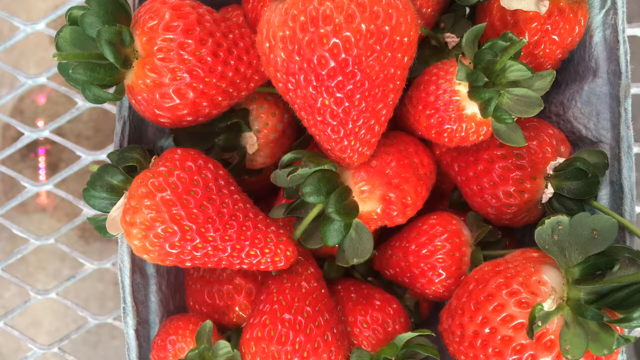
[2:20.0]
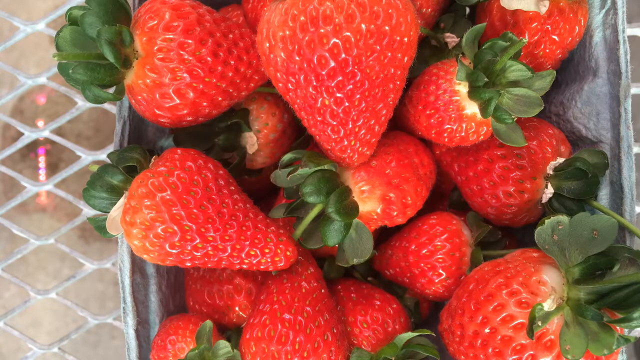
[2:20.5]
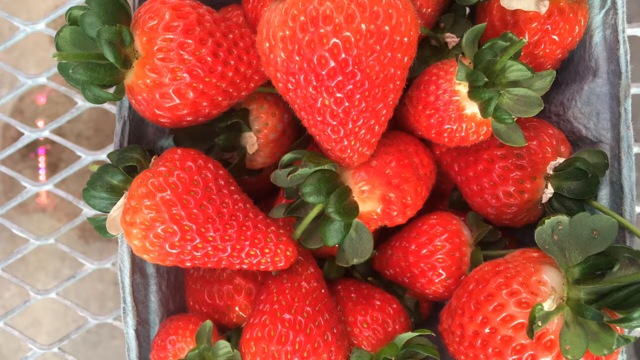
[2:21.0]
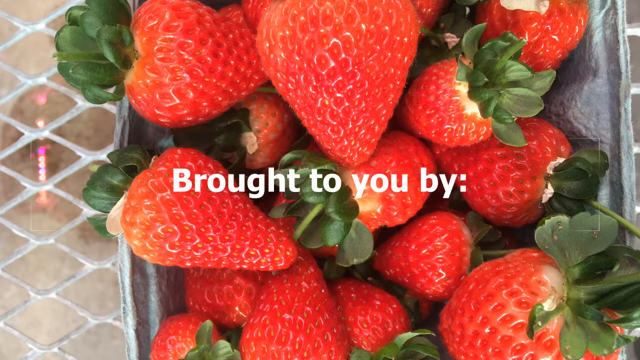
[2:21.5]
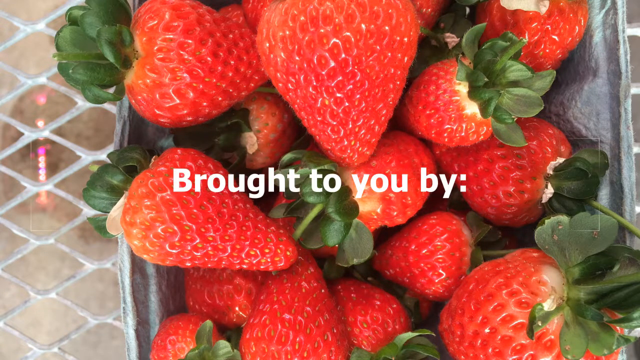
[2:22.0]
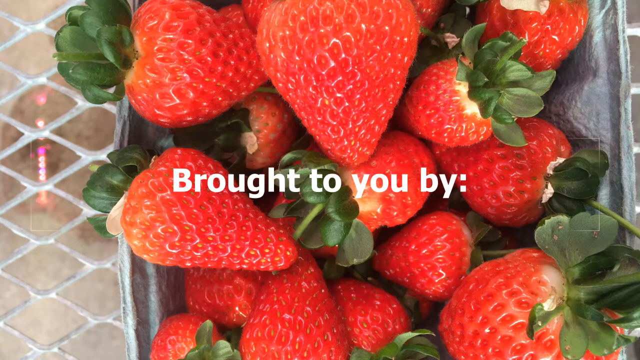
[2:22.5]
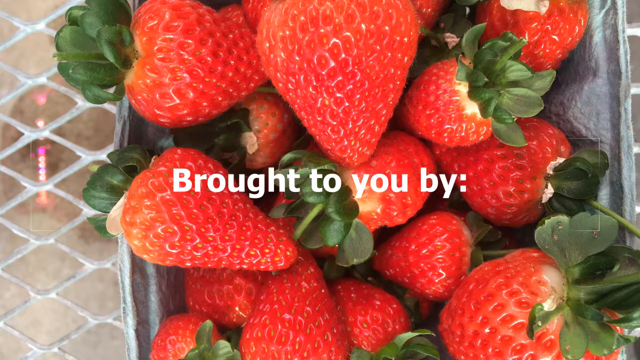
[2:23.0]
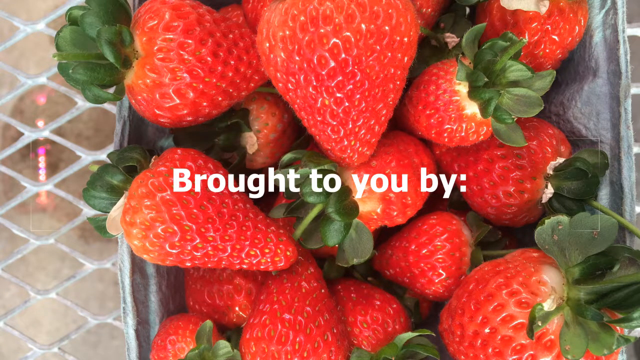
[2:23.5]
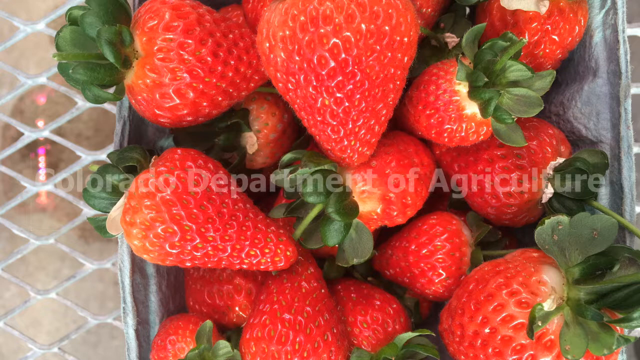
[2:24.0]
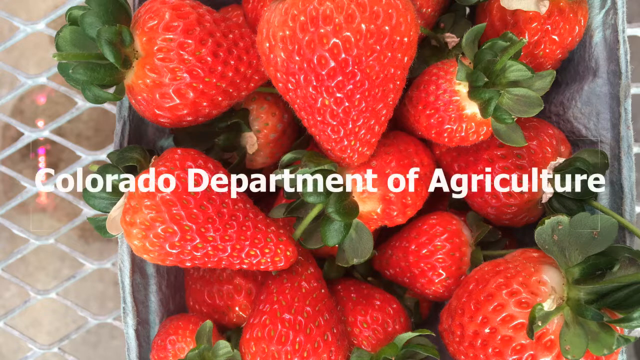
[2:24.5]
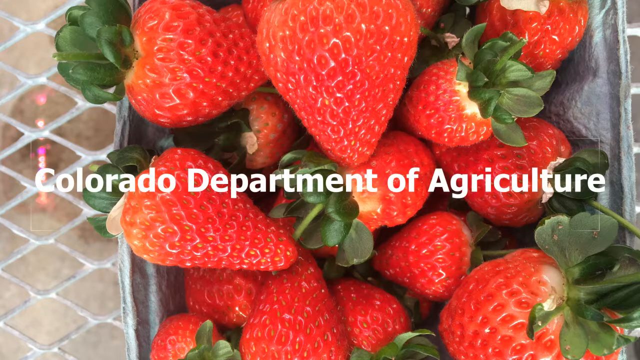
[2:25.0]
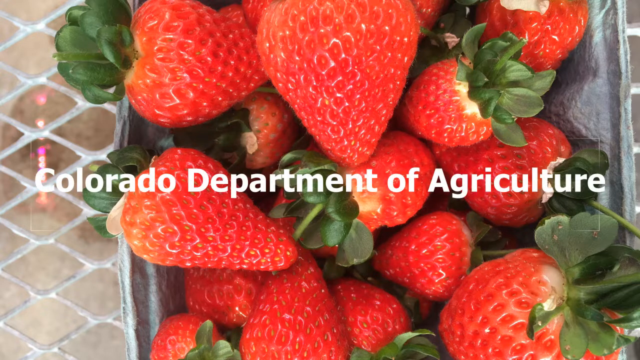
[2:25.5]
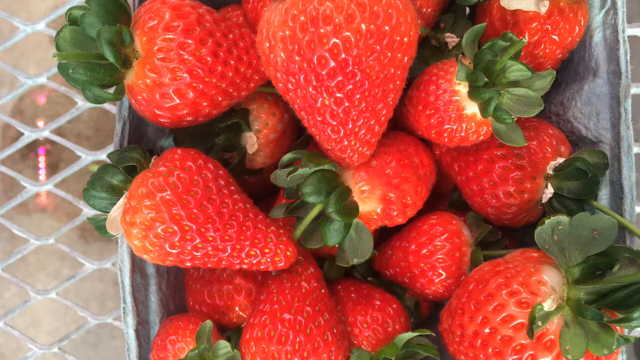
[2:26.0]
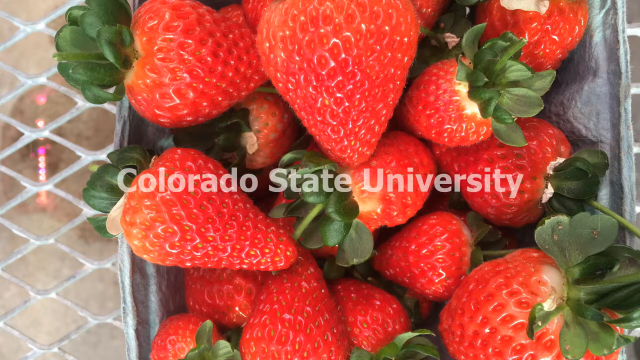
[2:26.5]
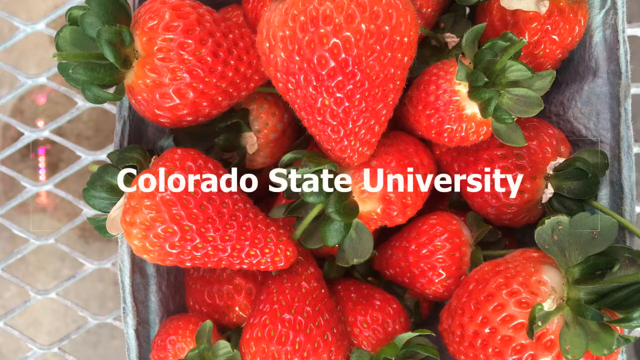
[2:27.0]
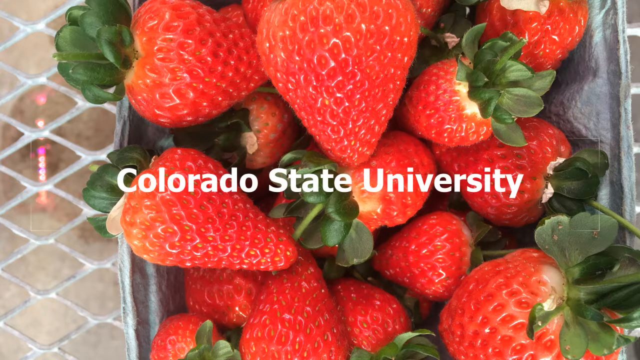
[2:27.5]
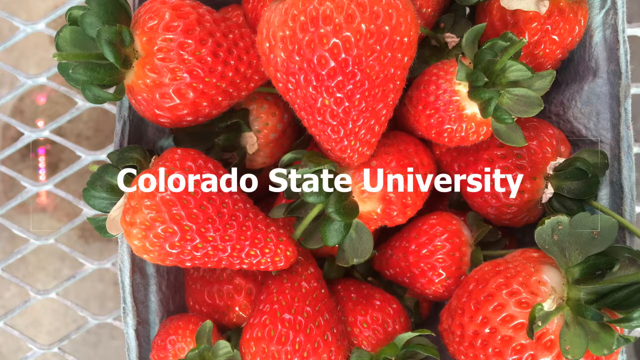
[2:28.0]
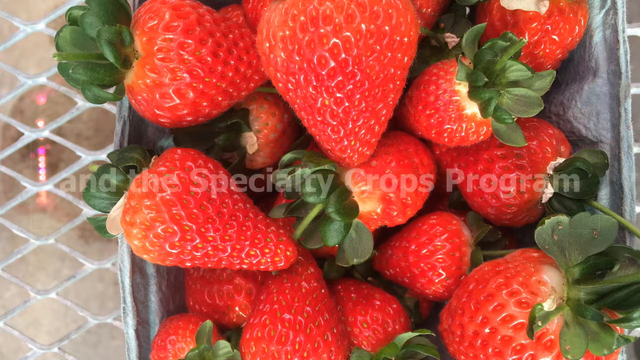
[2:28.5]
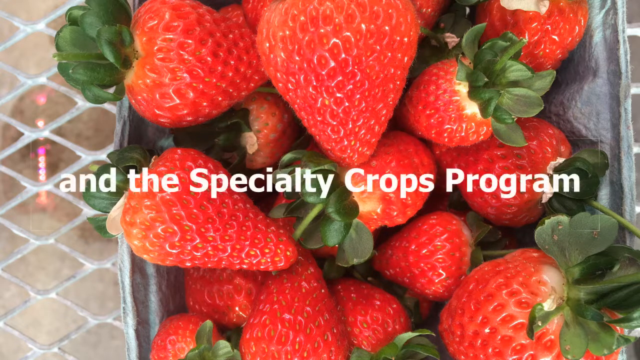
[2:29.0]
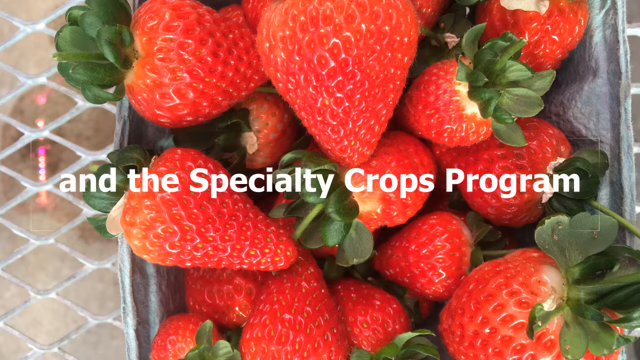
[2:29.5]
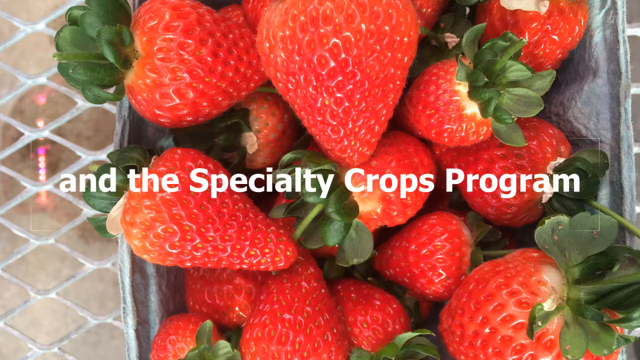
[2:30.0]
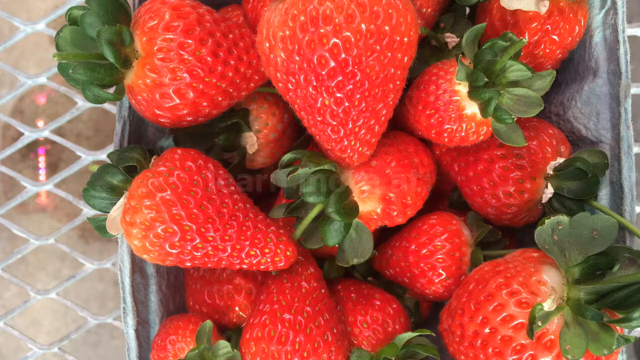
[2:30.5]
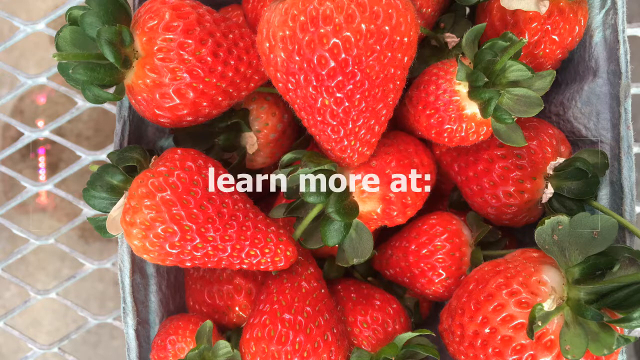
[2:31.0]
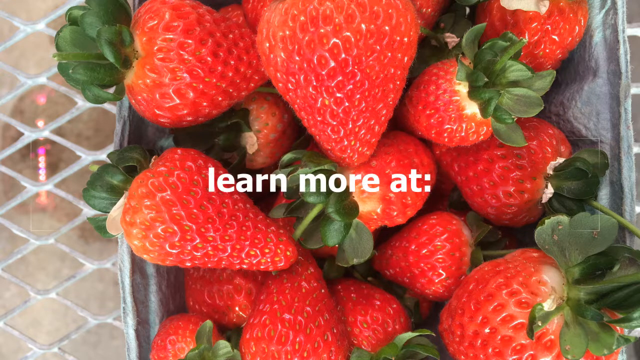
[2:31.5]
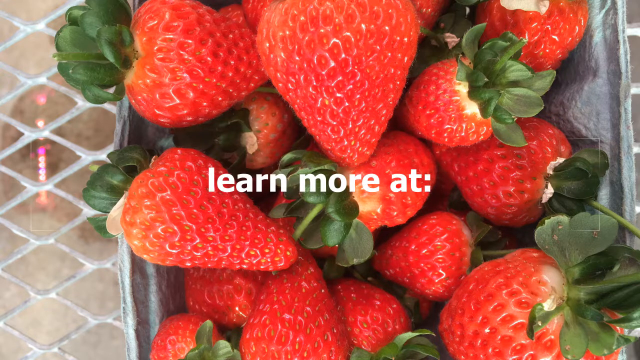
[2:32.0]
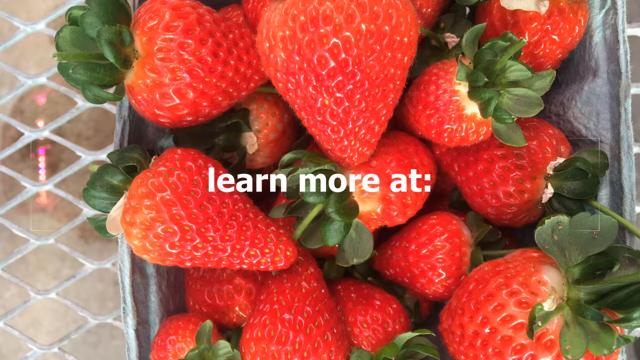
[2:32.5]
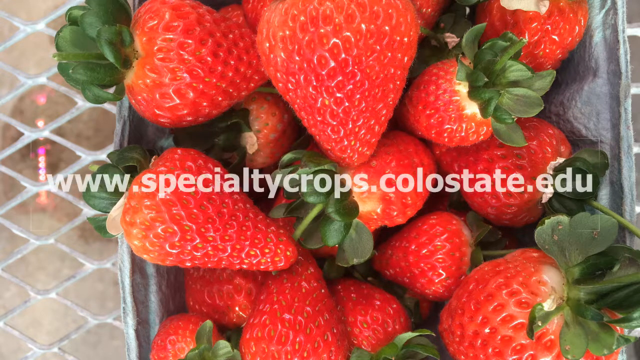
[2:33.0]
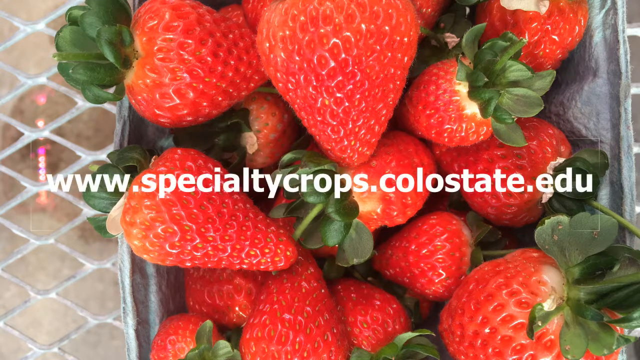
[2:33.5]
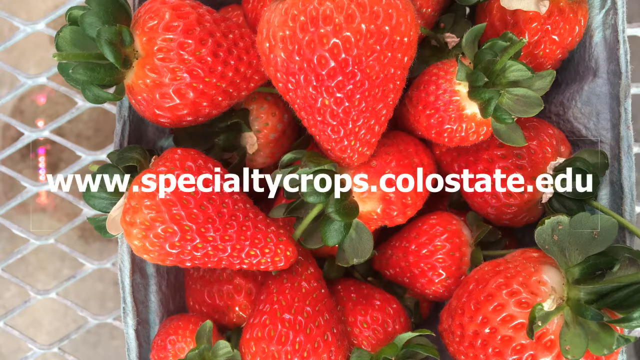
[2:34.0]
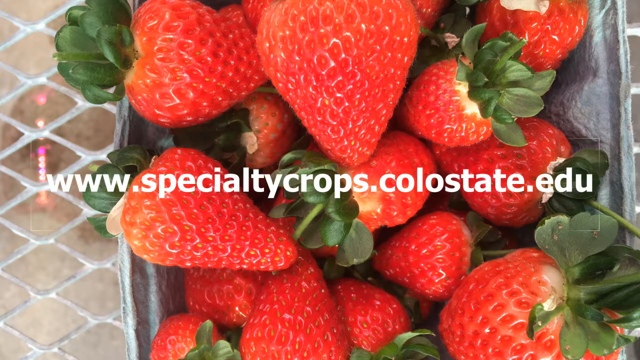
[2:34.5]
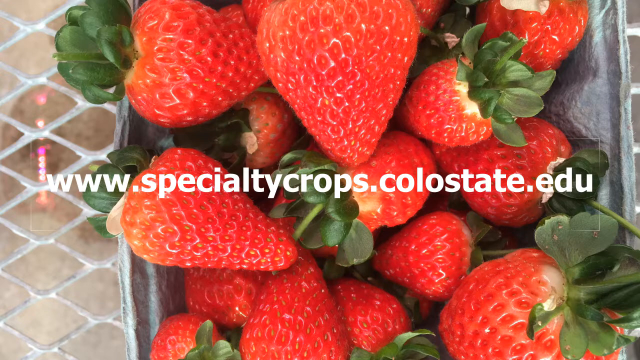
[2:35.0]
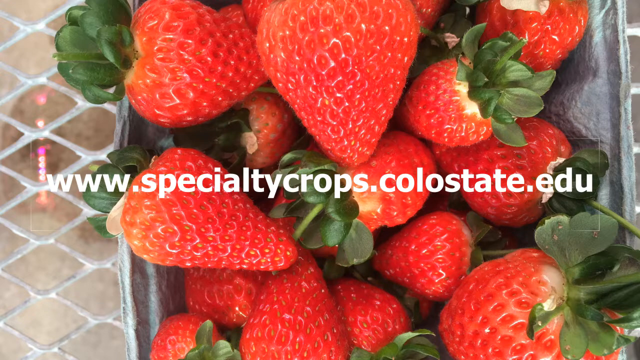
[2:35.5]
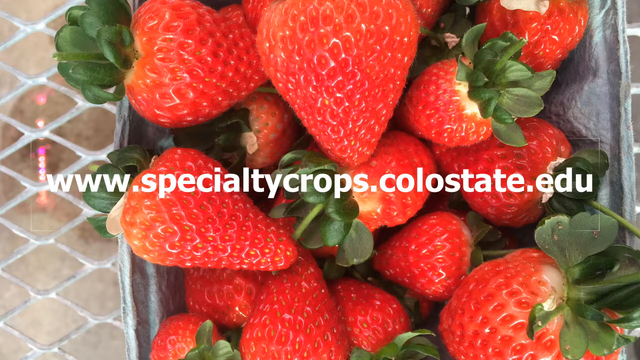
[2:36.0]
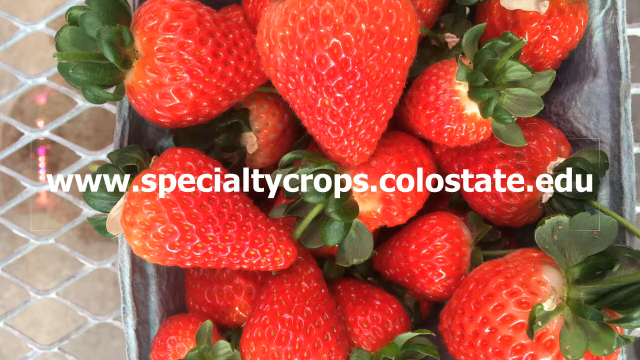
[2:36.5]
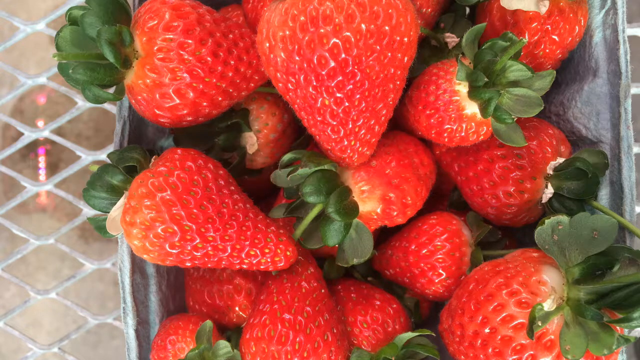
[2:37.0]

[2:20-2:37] The overhead view of the small light gray cart of fresh red strawberries continues. White words appear in the middle in sequence: "brought to you by," "Colorado Department of Agriculture," "Colorado State University," "and the specialty crops program," "learn more at," and the website "www.specialtycrops.colostate.edu." The strawberries look very red and ripe and are in the light gray cart, which is on some sort of what looks like a wired table.